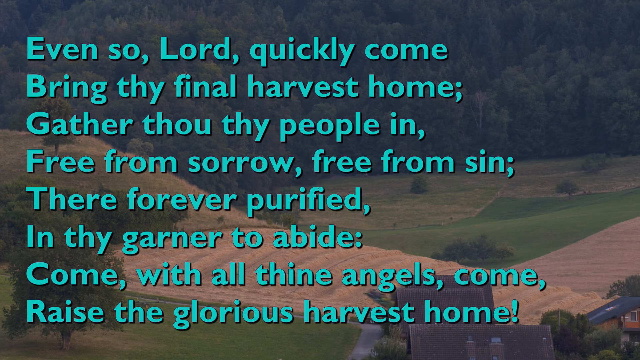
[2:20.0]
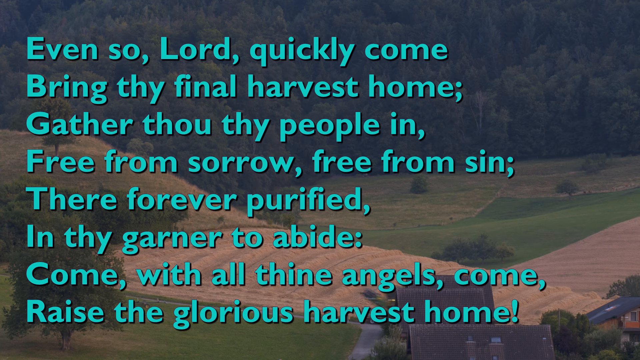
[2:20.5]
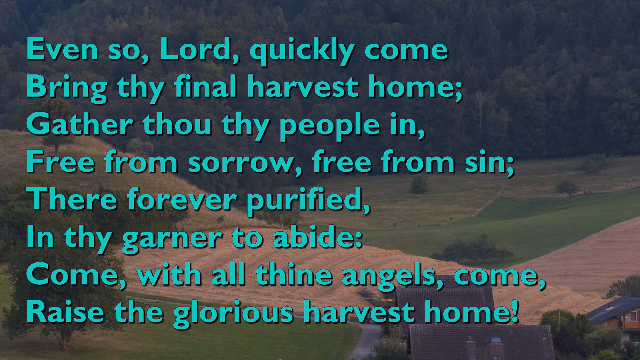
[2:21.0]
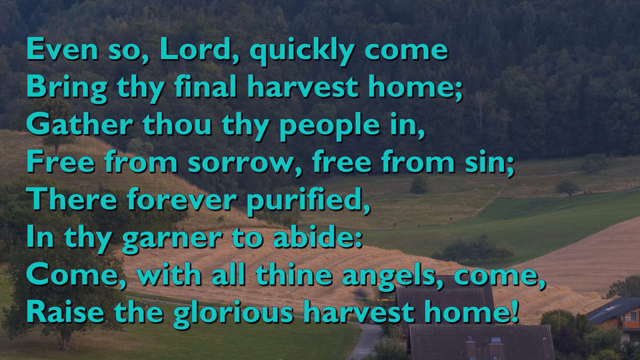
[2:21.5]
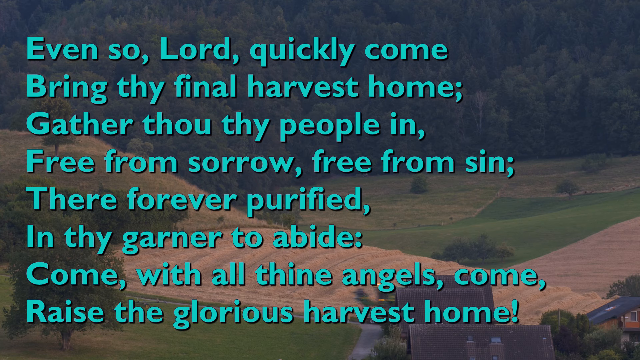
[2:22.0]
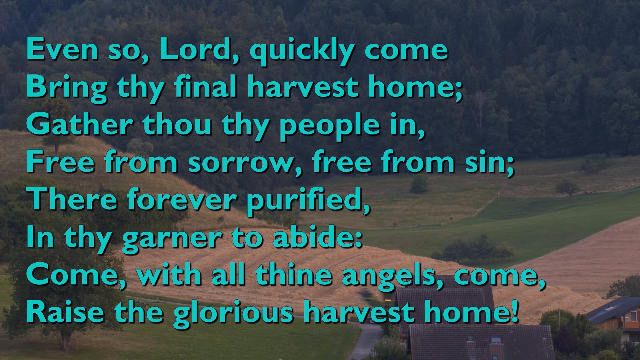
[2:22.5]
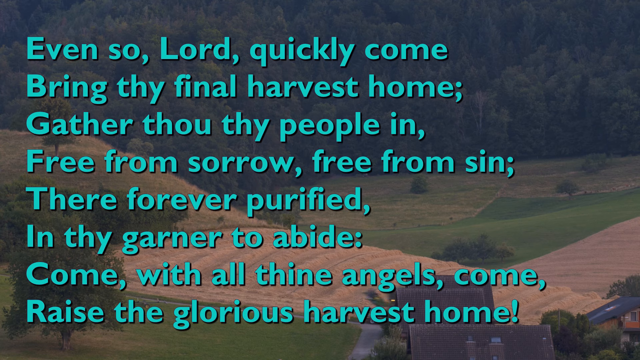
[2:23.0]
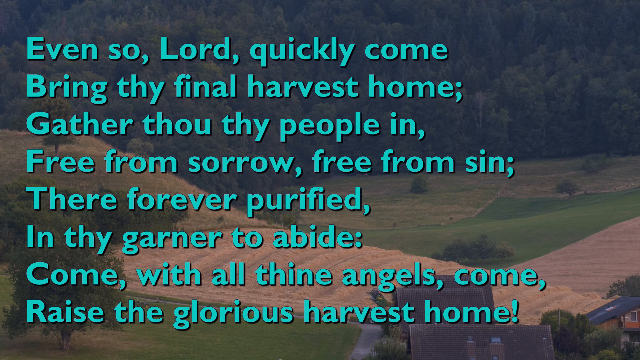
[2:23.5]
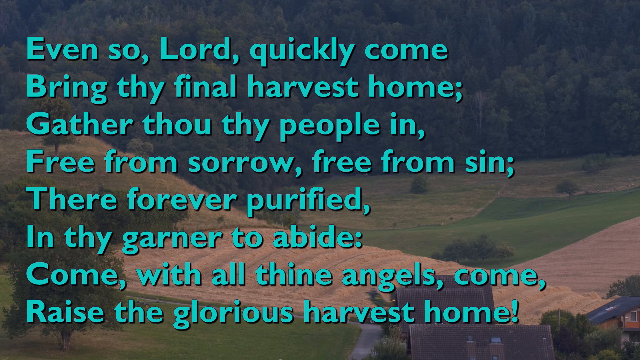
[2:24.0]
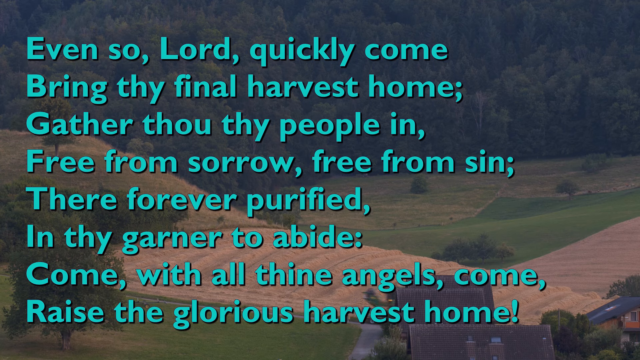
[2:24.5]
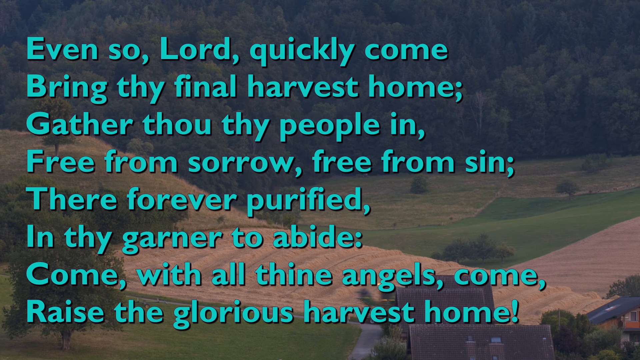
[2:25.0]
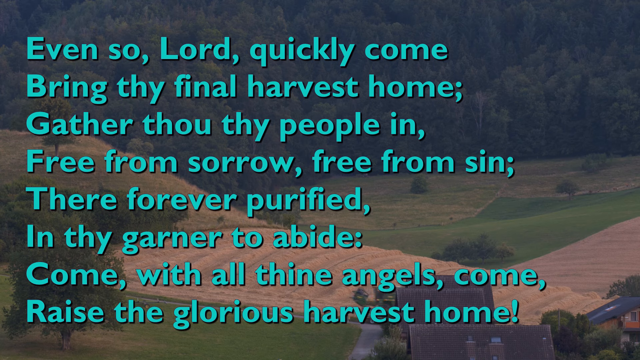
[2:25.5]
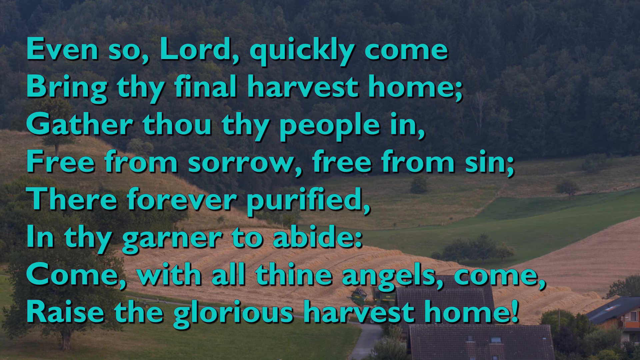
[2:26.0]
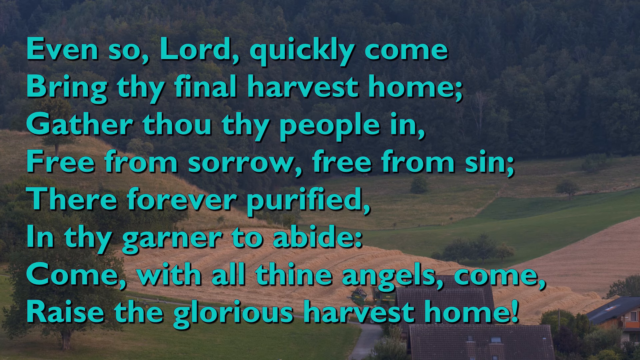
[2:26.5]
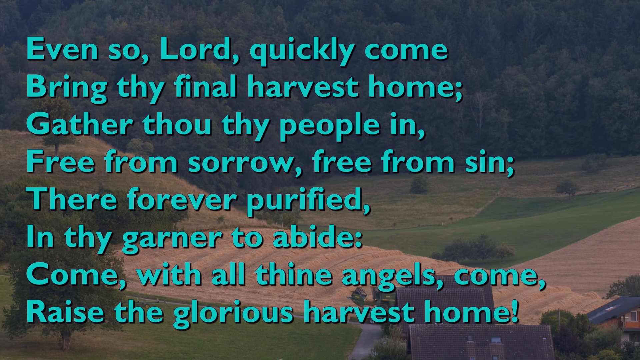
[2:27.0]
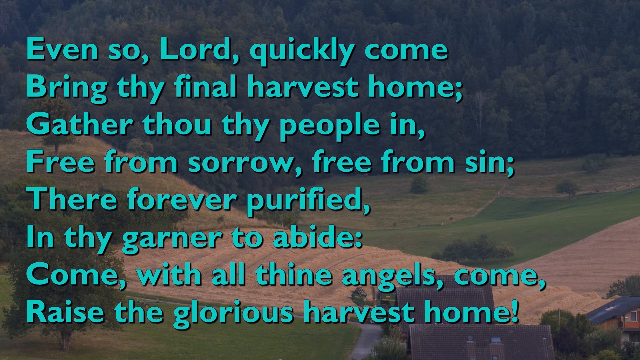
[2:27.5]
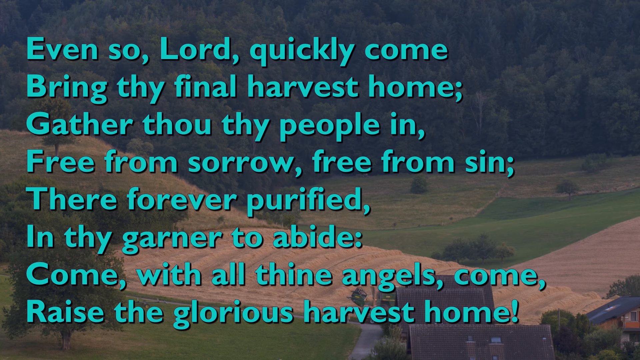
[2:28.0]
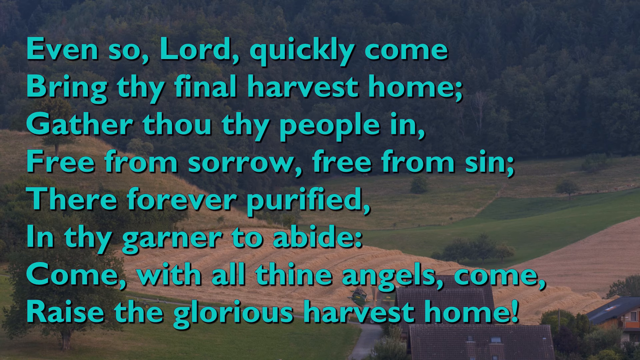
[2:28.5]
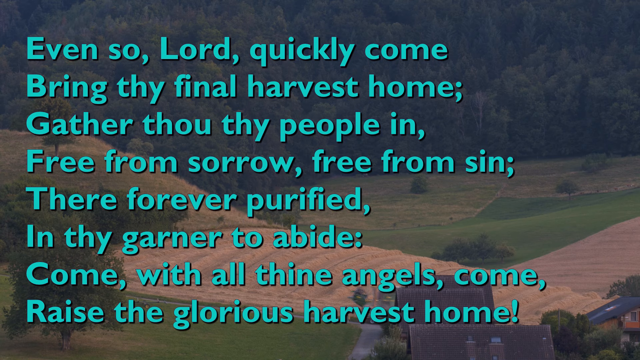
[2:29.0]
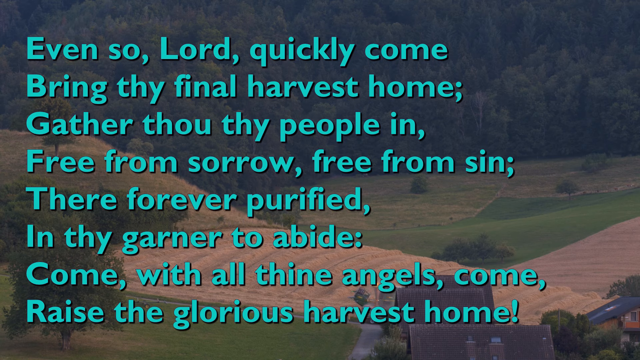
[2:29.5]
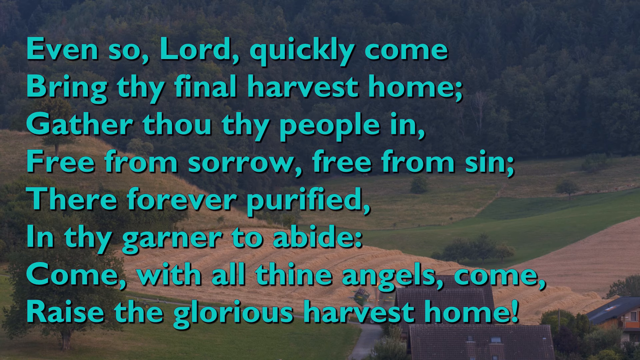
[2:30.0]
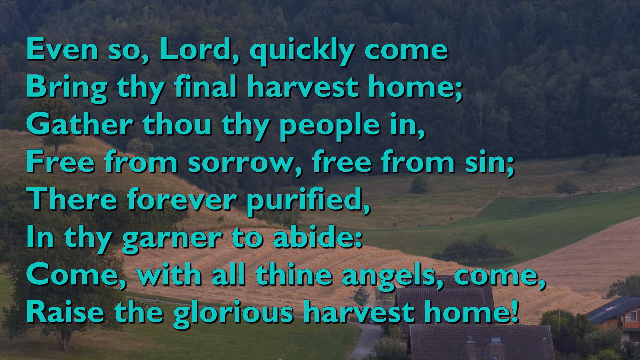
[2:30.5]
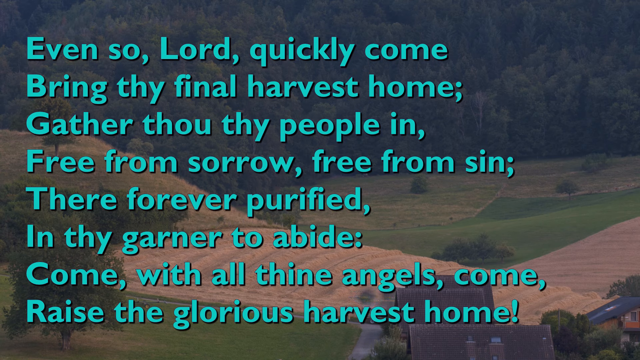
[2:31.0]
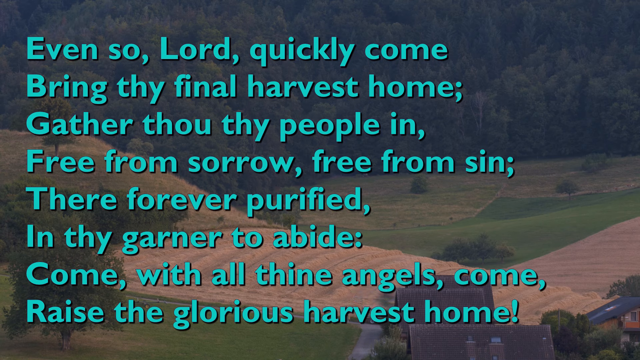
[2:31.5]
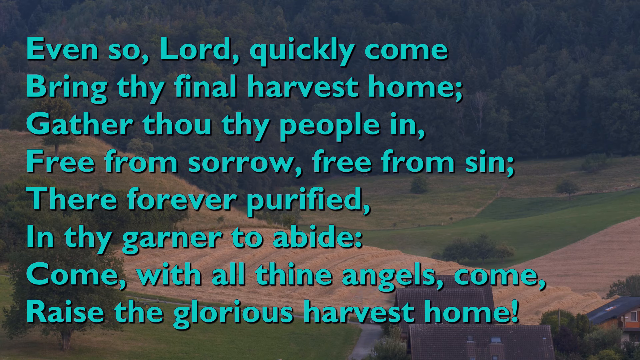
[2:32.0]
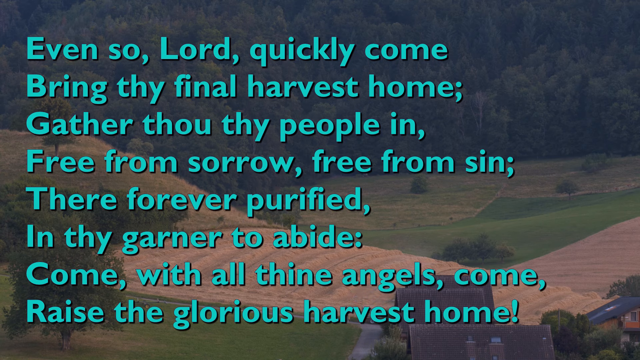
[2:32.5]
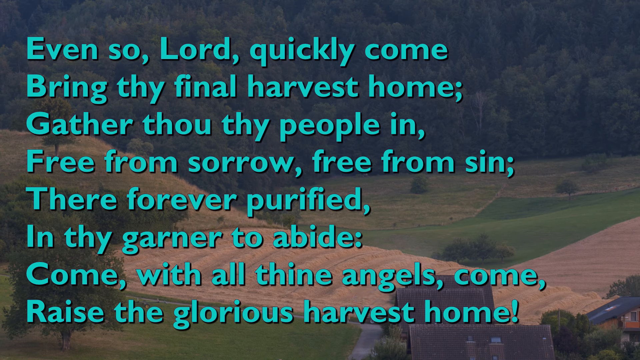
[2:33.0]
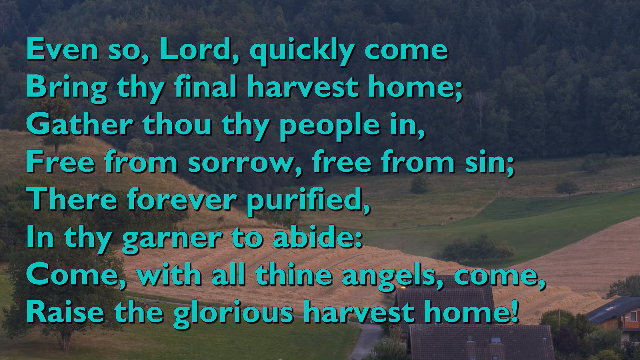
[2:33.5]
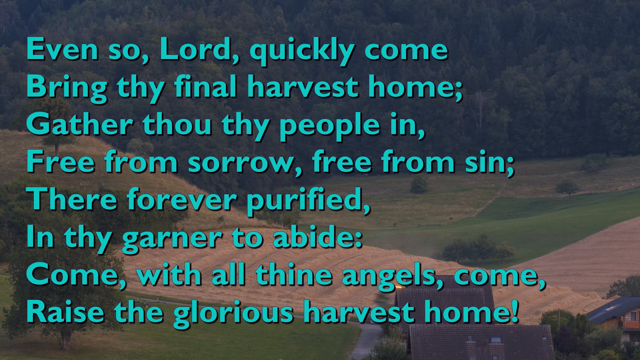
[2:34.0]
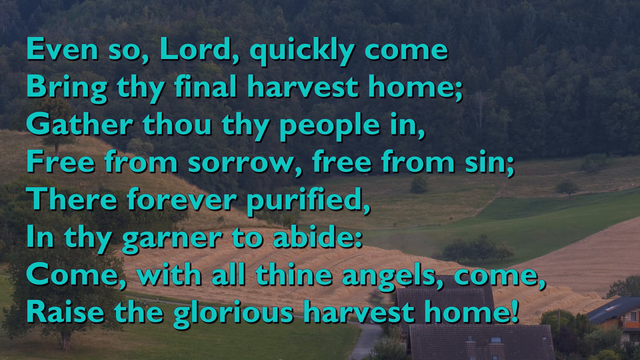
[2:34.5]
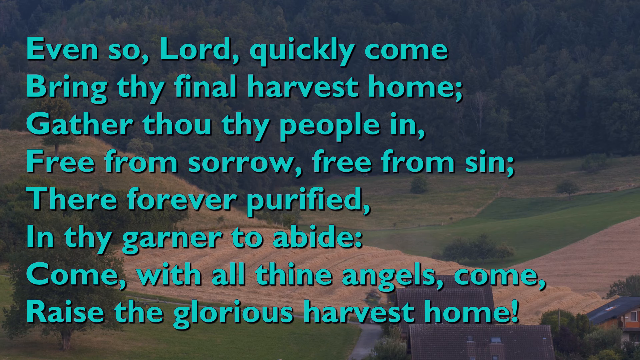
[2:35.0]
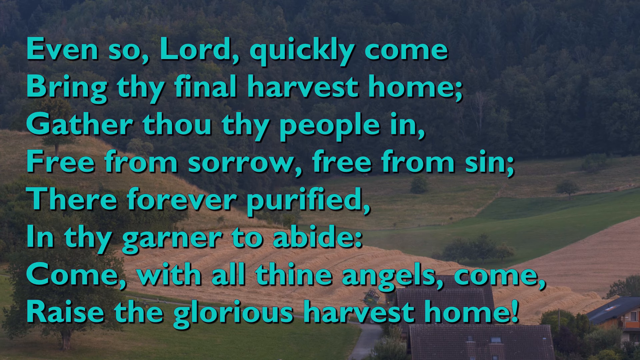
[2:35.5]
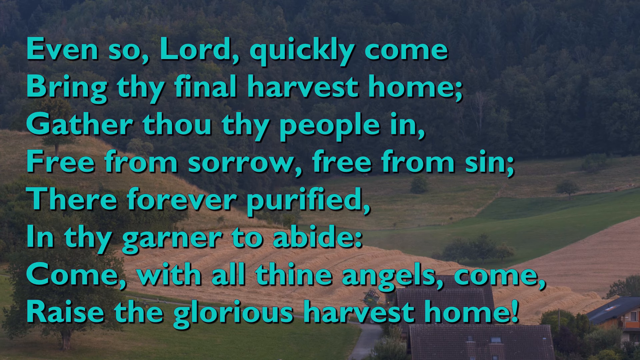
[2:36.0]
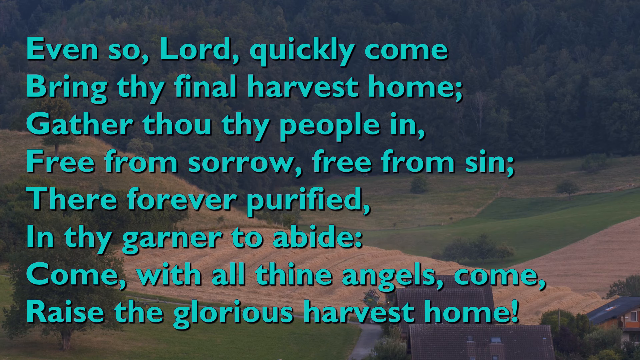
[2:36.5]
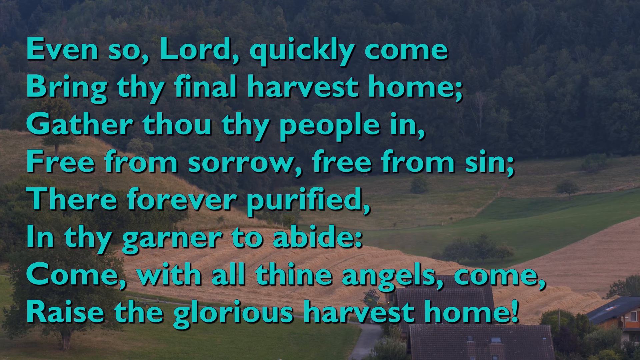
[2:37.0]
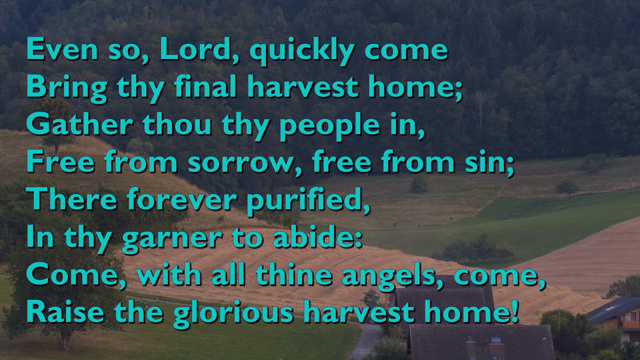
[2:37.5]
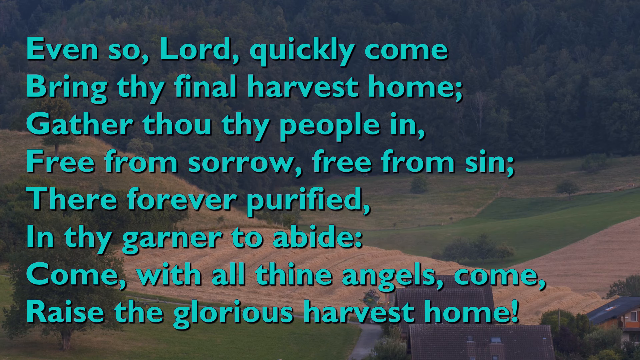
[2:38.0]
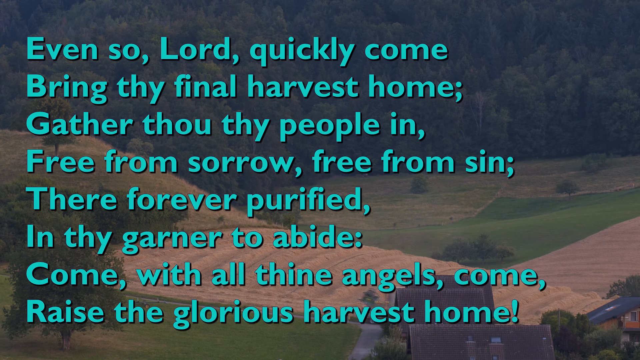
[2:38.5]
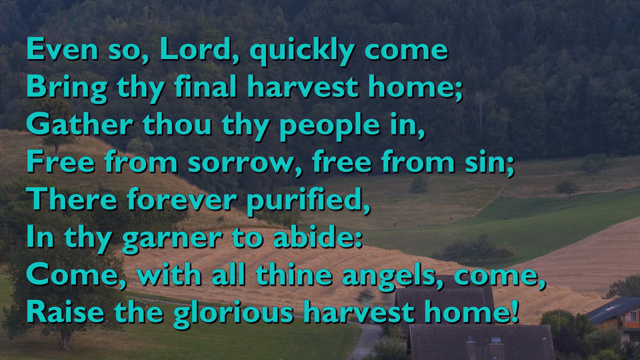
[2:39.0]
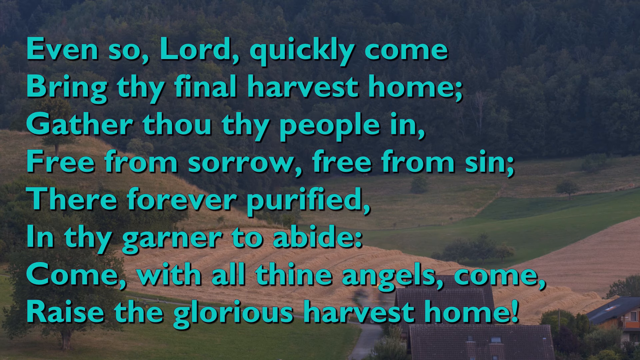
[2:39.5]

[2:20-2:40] In the bottom right-hand corner are the rooftops of two small houses. In front of them is a wheat field, where a small truck is cutting down layers of wheat. Past the wheat field is a dark green area that looks like a perfectly manicured yard, and past that more light brown and green land that is not as manicured. In the background are very tall, dark green evergreen trees that cannot be seen through; the whole screen is nothing but evergreen trees. There is also a hill with one single solitary tree on it. Across the screen, in turquoise, the text reads: "Even so, Lord, quickly come, bring thy final harvest home, gather thou thy people in, free from sorrow, free from sin, that they are forever purified, in thy garner to abide, come with all thine angels come, raise a glorious harvest home."